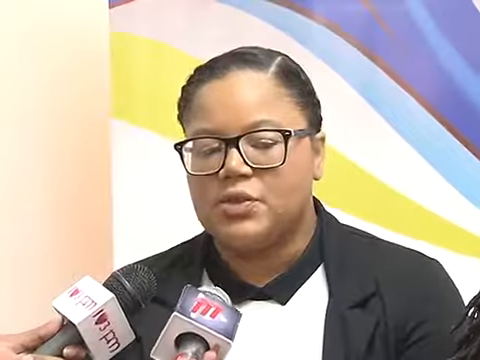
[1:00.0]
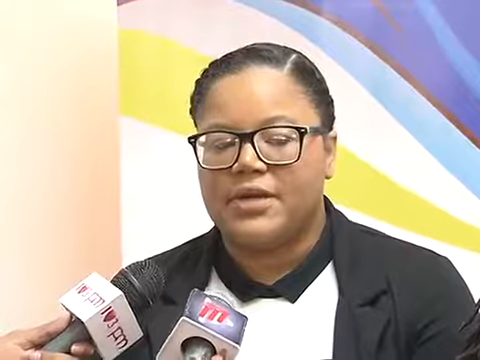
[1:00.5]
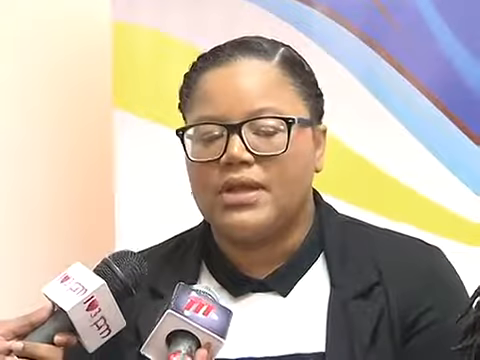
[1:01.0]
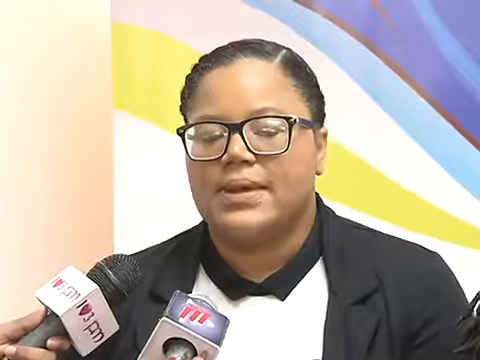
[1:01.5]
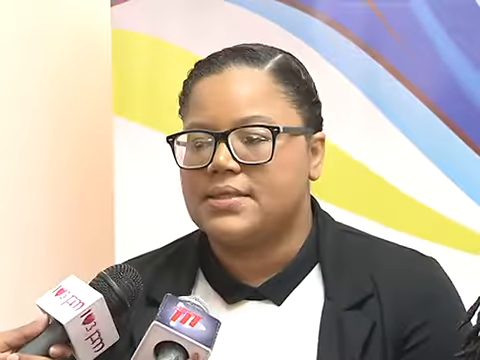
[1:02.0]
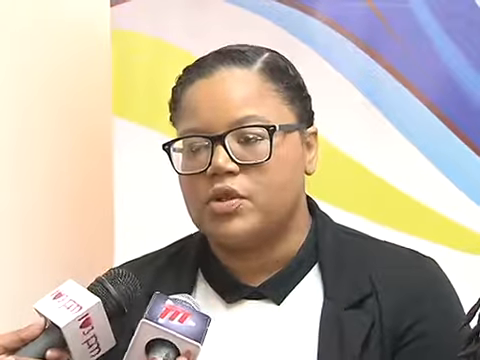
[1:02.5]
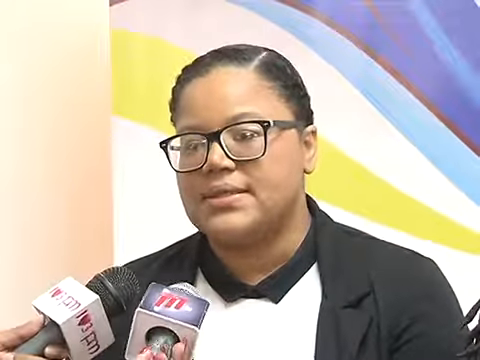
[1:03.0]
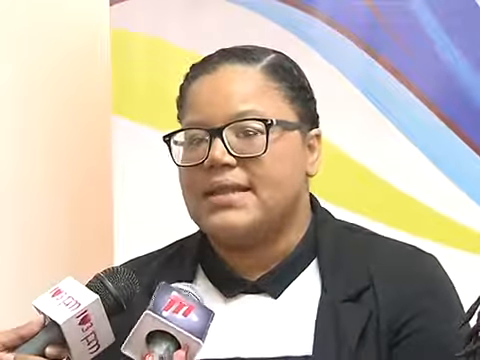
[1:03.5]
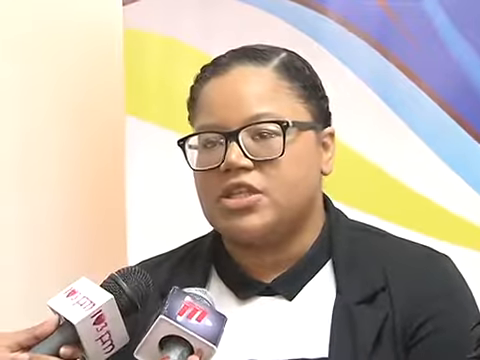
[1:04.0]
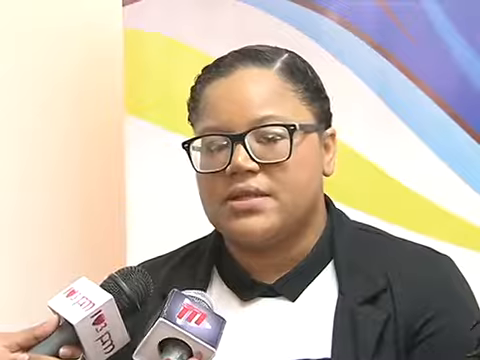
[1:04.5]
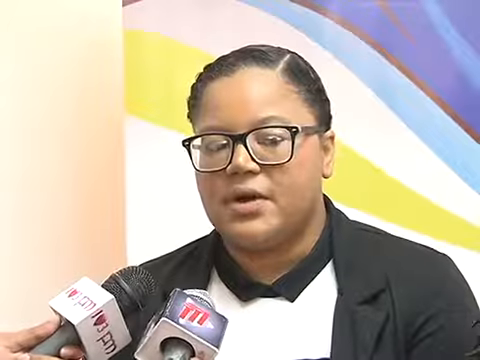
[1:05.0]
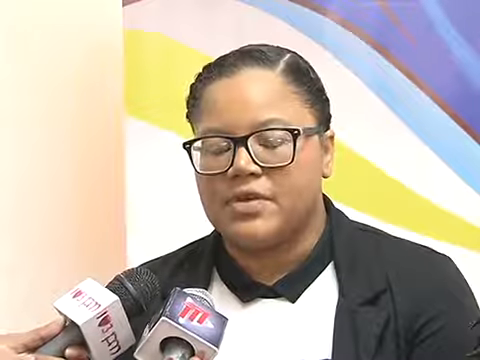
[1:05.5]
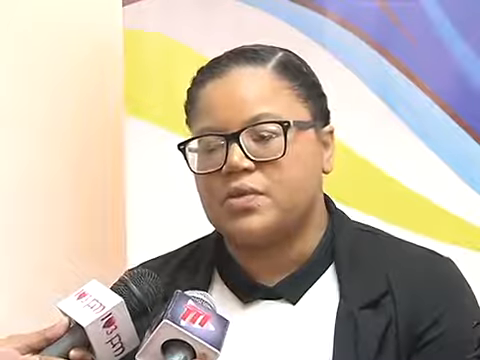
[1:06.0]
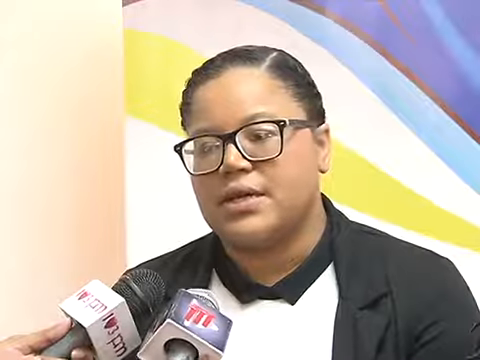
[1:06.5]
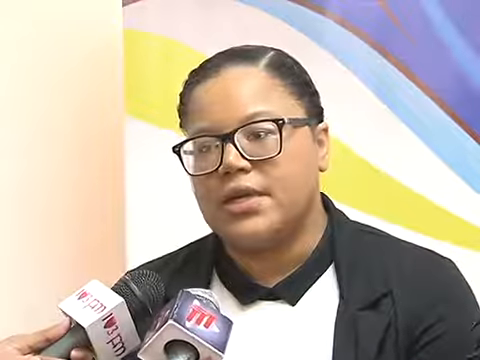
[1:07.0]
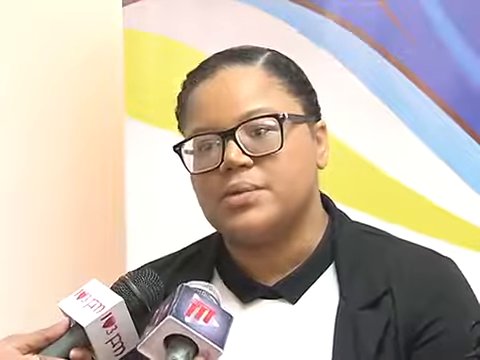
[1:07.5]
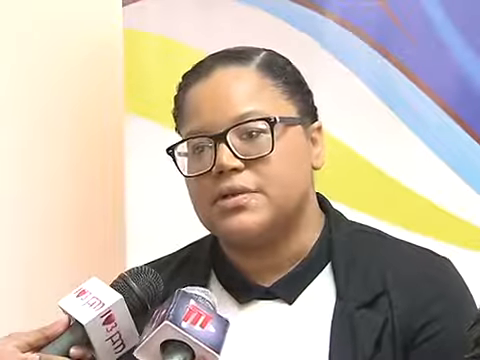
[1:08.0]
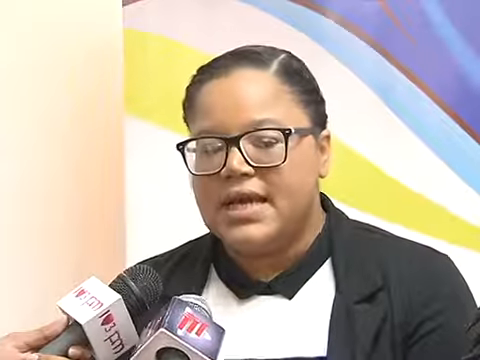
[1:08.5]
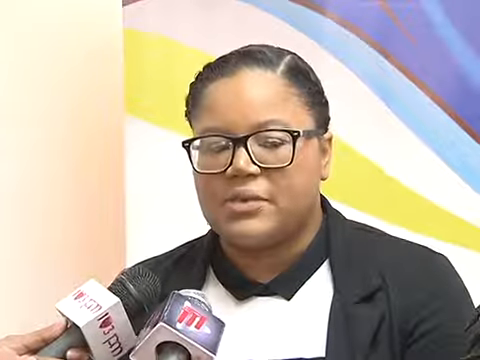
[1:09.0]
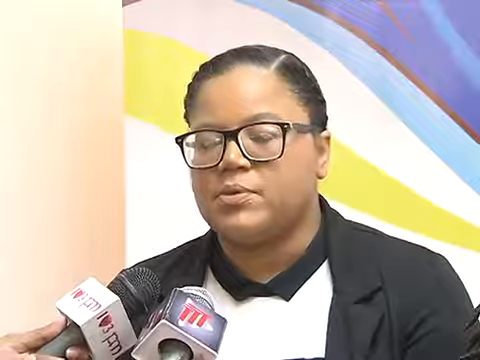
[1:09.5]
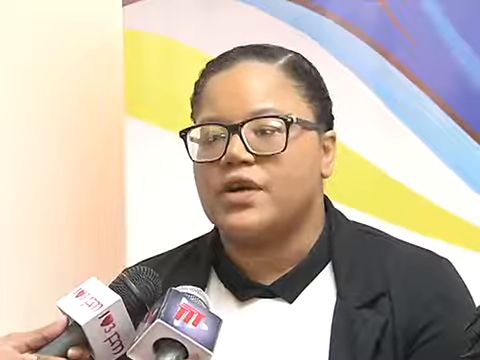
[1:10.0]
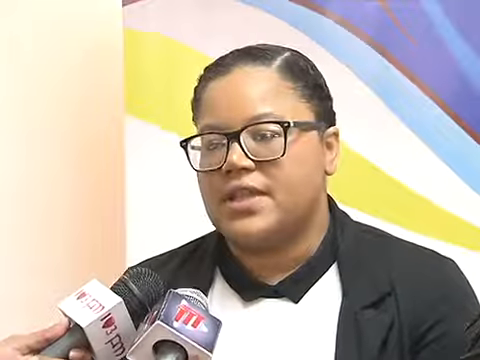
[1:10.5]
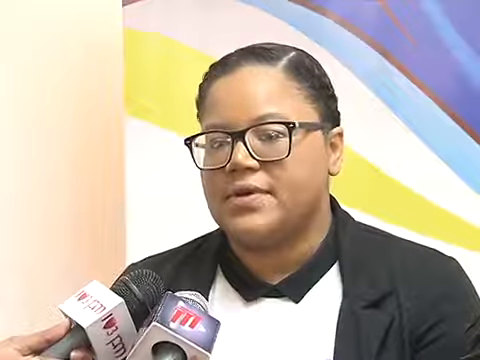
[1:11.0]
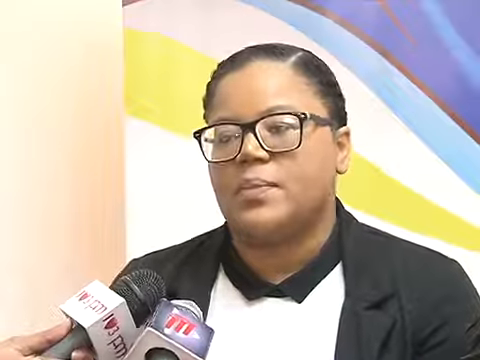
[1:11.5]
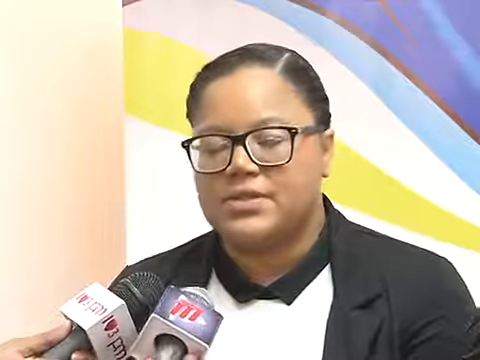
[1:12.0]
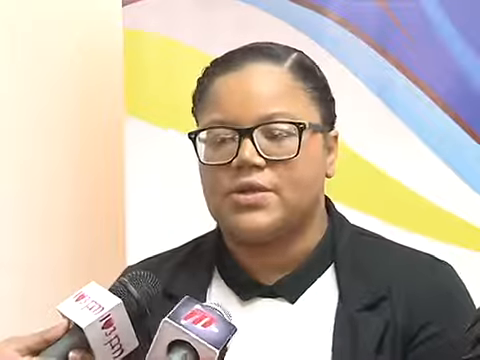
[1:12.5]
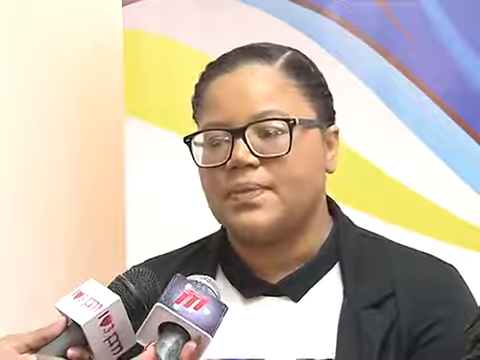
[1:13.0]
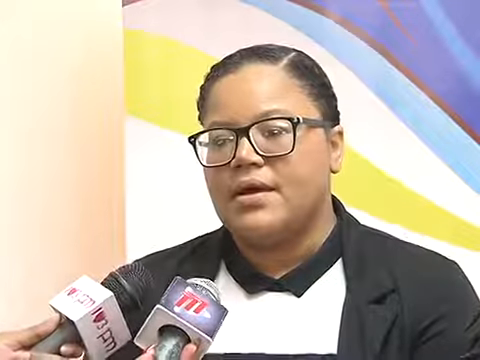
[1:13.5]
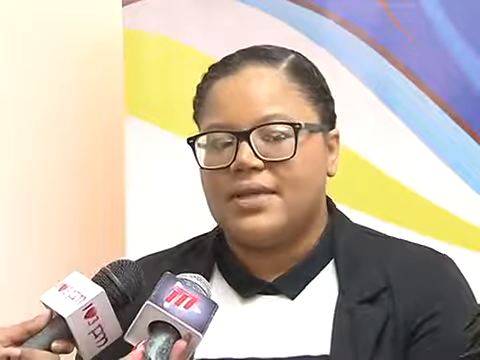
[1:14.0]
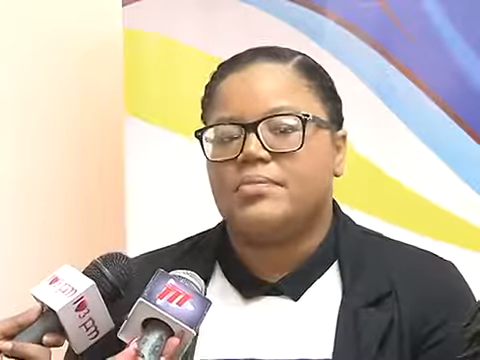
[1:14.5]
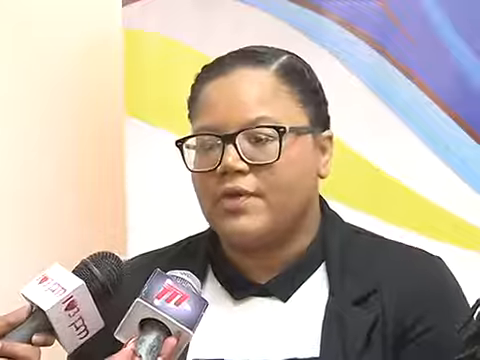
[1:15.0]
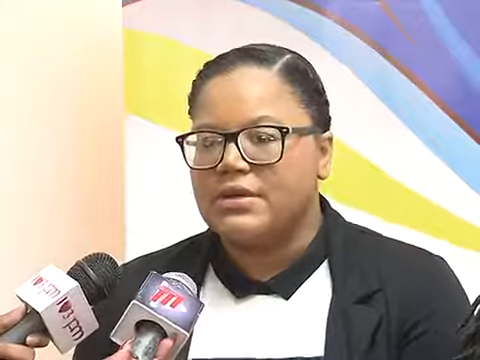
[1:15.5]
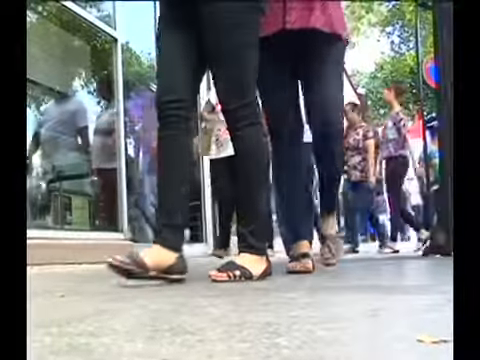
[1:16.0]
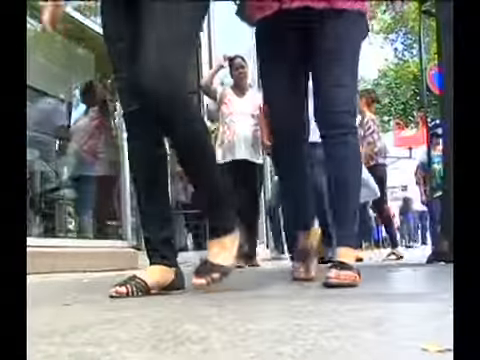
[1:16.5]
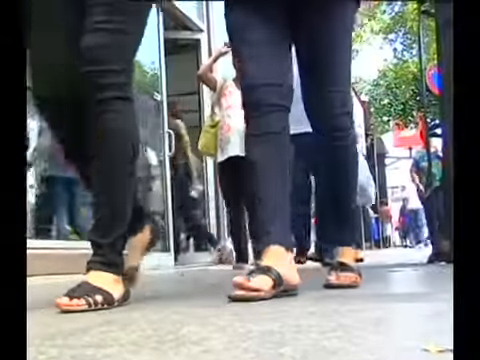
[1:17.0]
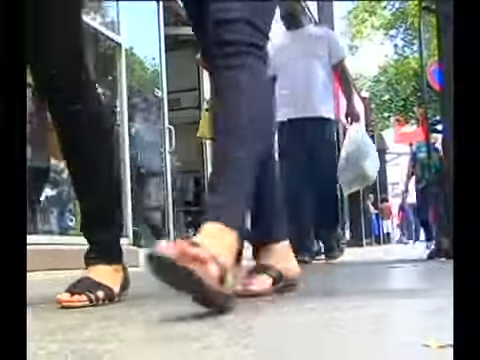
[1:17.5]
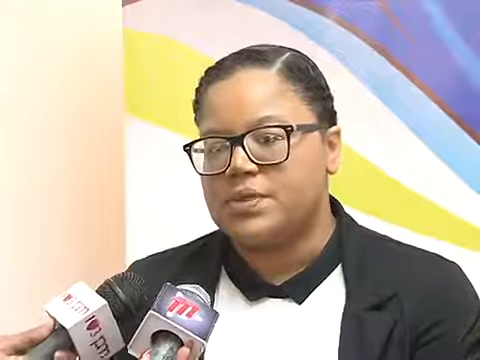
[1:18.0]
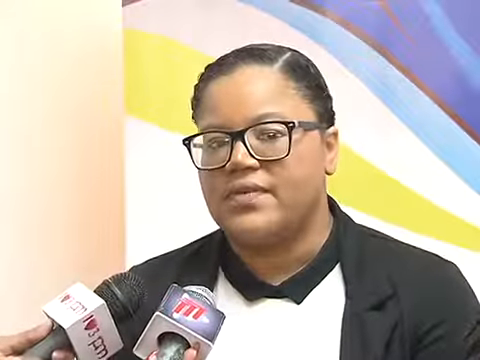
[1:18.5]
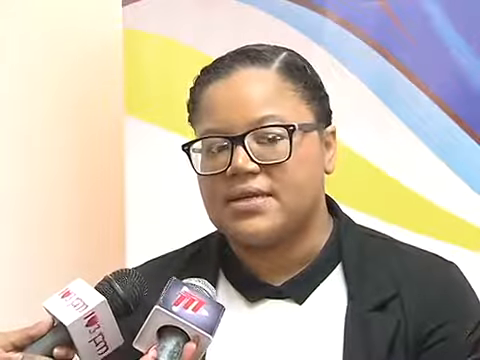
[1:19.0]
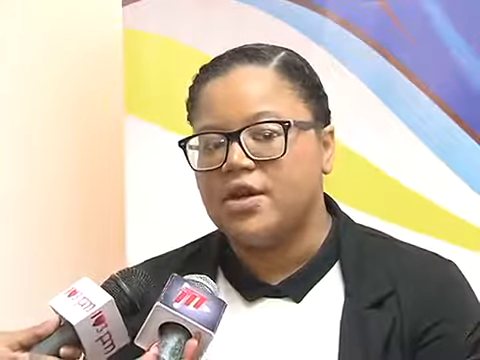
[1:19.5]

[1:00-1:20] A woman talks passionately into two microphones held by people who cannot be seen; the microphones carry the logos of the television company. She wears black glasses and has neat black hair tied back. Behind her is a painting with a yellow and white pattern of stripes running from one corner to the other. The video cuts to a busy shopping area with people going into and out of shops on a warm day, wearing sandals and jeans without jackets. It then cuts back to the woman speaking, and then to the busy shopping area again, with people going into and out of shops.